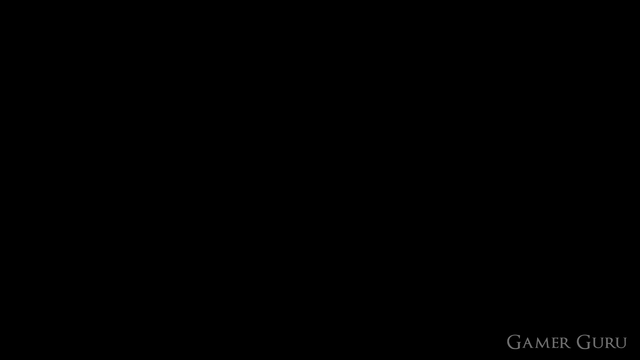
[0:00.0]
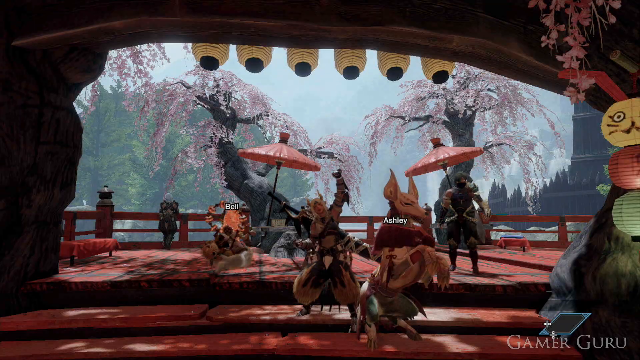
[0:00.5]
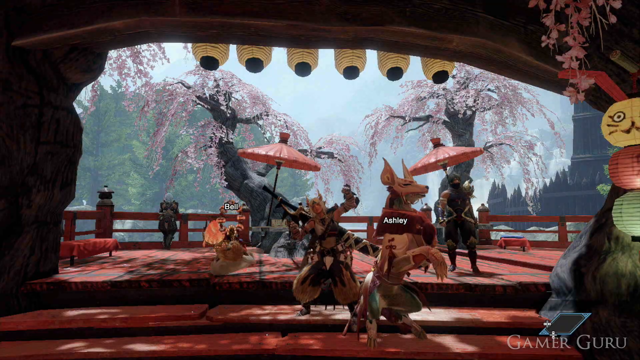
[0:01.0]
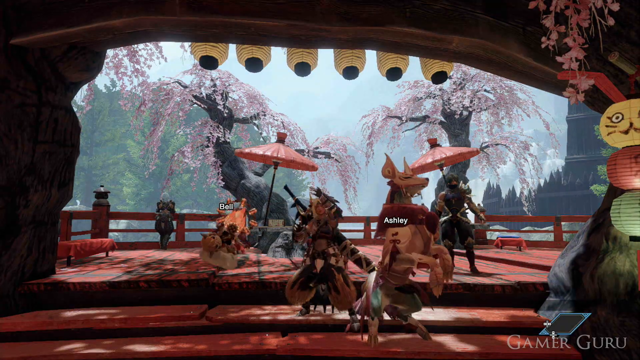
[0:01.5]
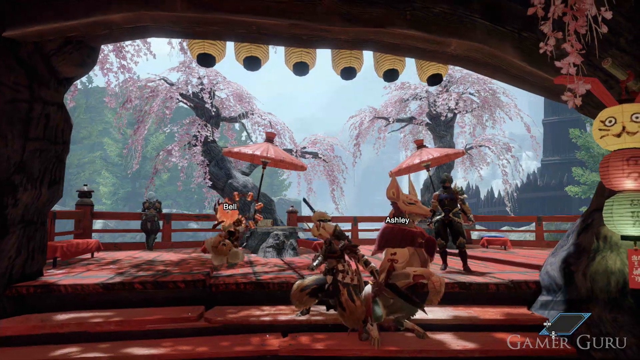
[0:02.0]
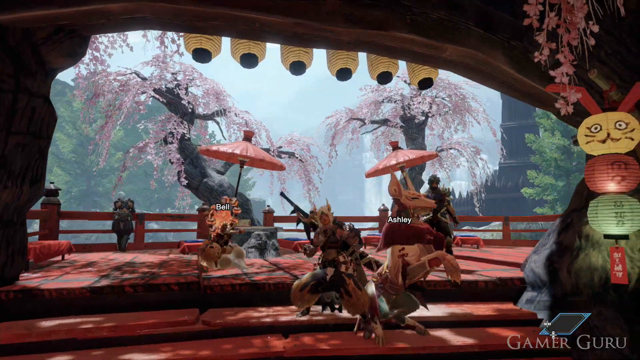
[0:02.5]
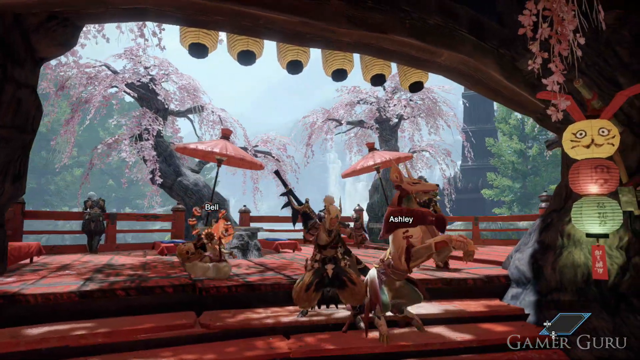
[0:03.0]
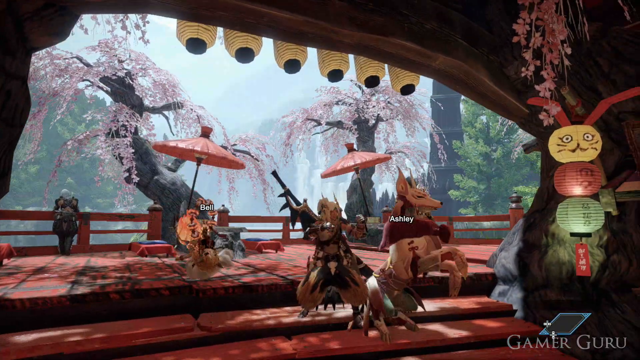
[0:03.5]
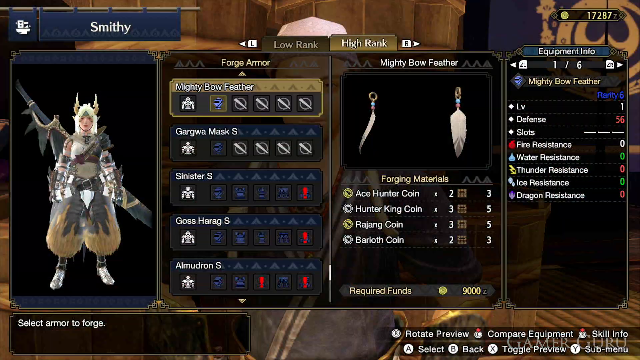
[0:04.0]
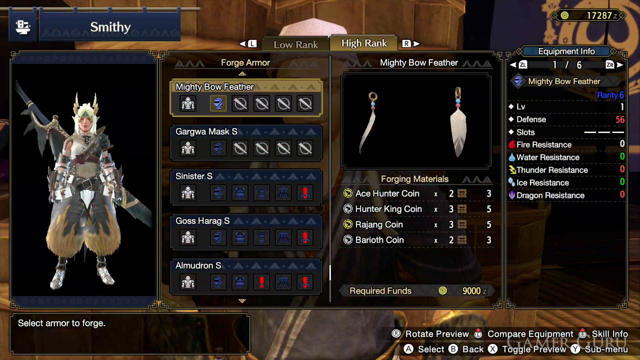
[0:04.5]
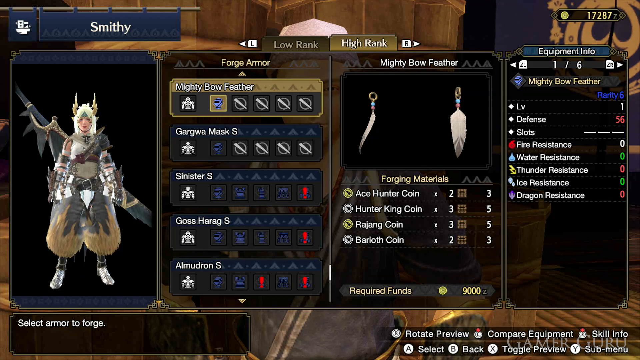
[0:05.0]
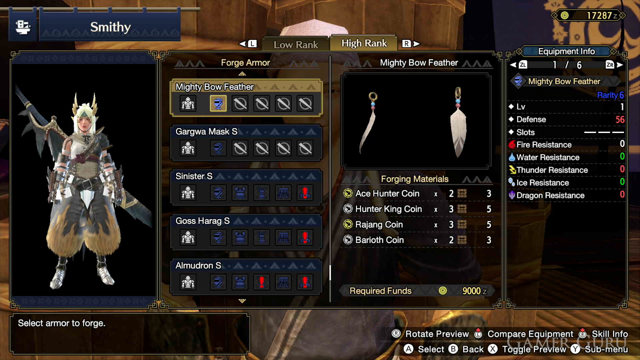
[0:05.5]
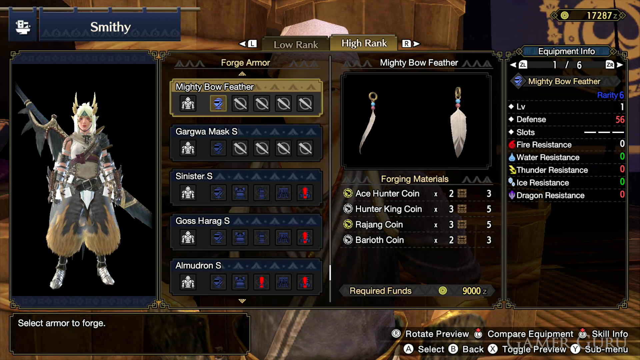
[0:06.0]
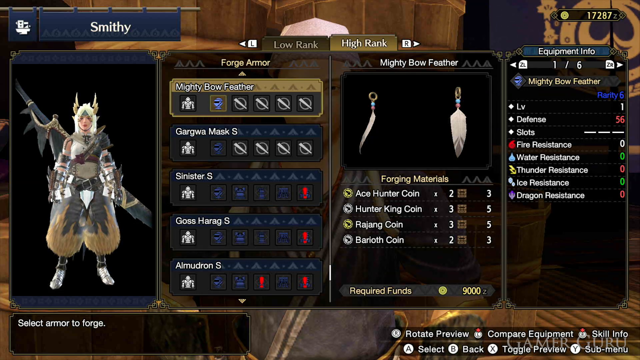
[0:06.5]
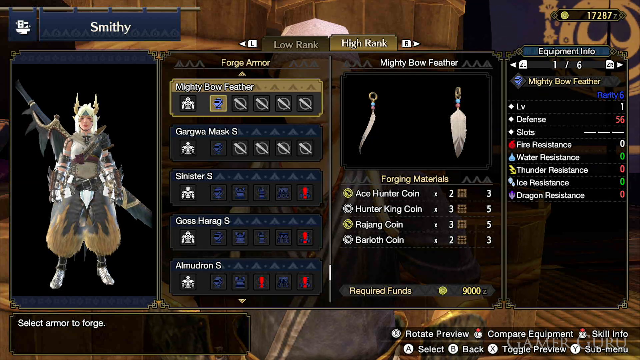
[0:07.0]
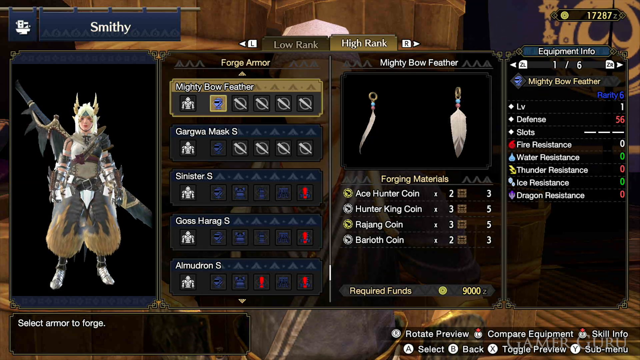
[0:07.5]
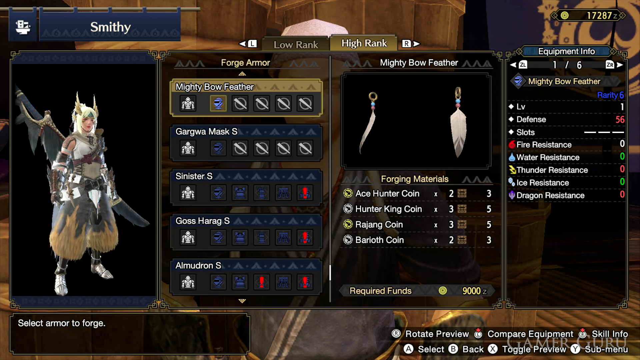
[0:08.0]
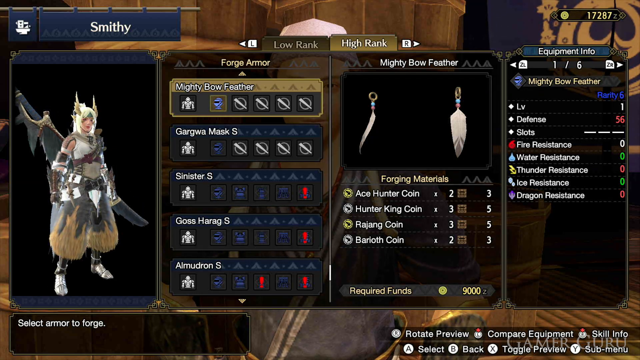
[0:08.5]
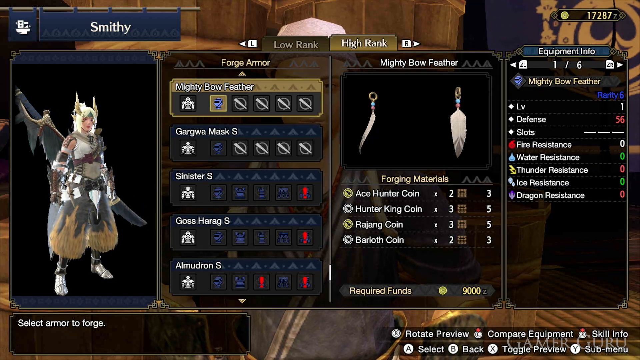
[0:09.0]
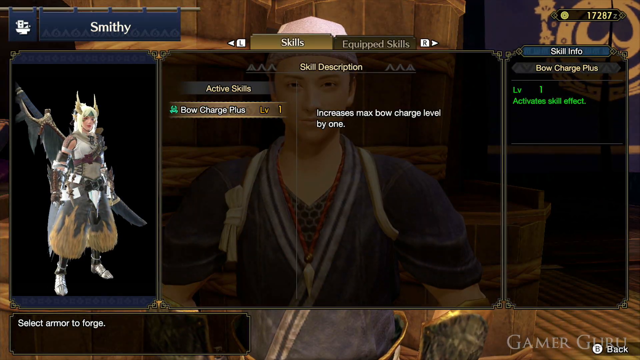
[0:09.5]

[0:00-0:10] A group of anime or cartoonish characters appears, apparently in a video game. Asian-styled lamps and umbrellas are in the scene, and what looks like cherry blossoms are in the background. The characters are on a deck made of some kind of redwood, and some of them look like they are dancing. One character's name is Ashley, and another's is Belly or Bell. The view switches to an inventory screen with the name "Smithy" at the top left, possibly indicating where the character is. The character wears some kind of traditional-looking garb with a giant sword on his back. The screen reads "forging materials" and shows a Mighty Bowfeather. The Smithy screen shows the character has 17,287 of the game's currency, and the Mighty Bowfeather is level 1 with defense 56.